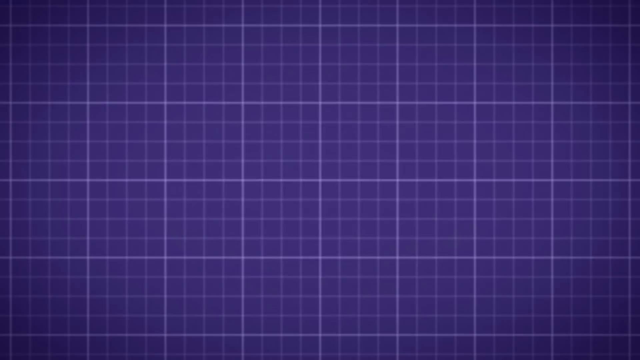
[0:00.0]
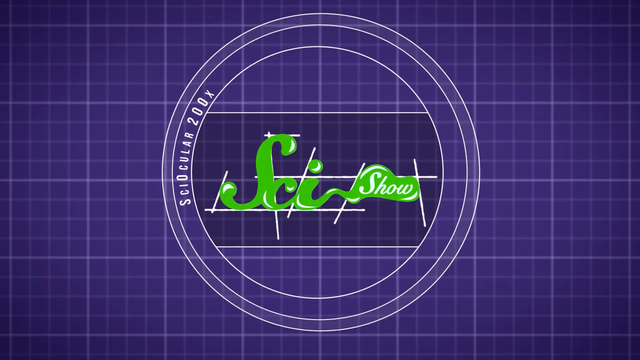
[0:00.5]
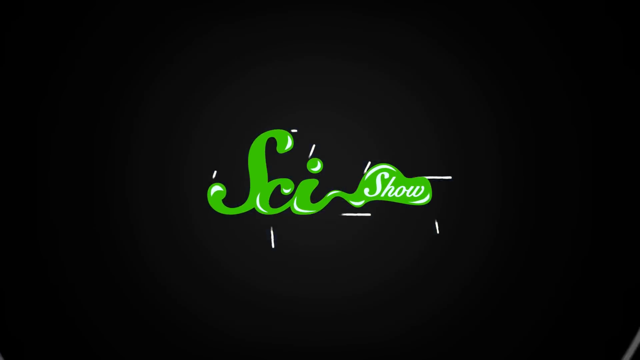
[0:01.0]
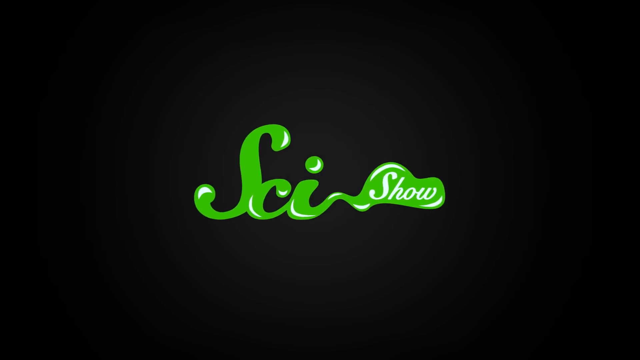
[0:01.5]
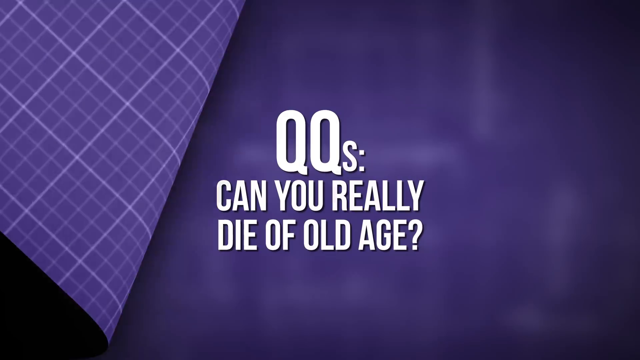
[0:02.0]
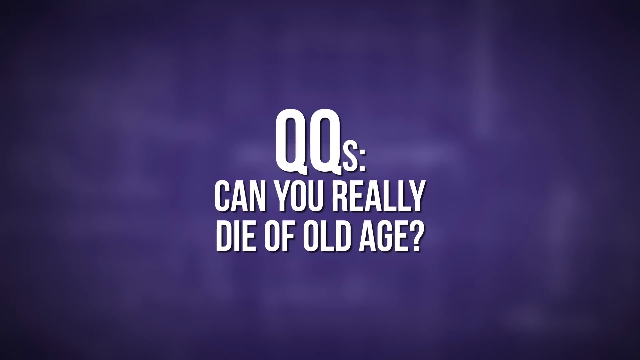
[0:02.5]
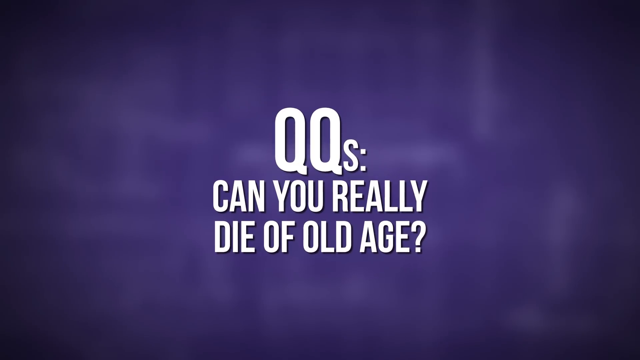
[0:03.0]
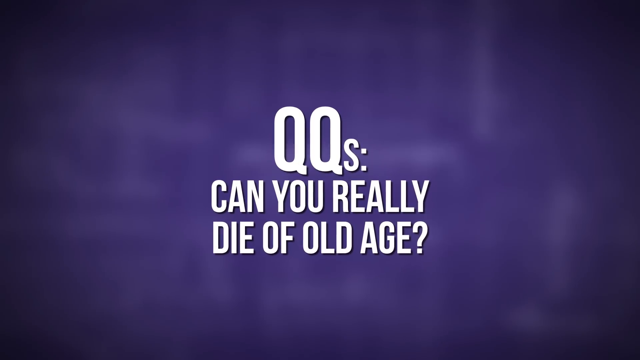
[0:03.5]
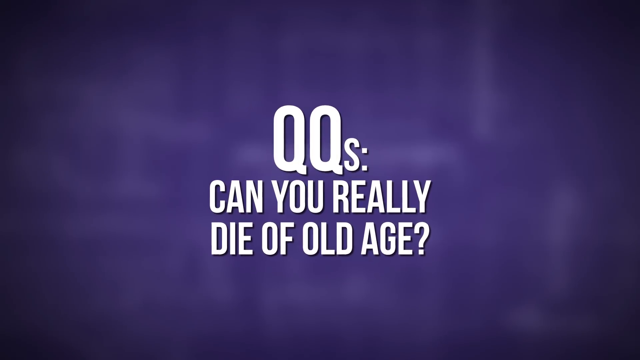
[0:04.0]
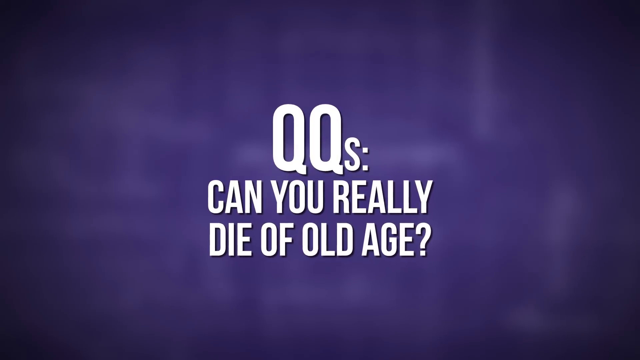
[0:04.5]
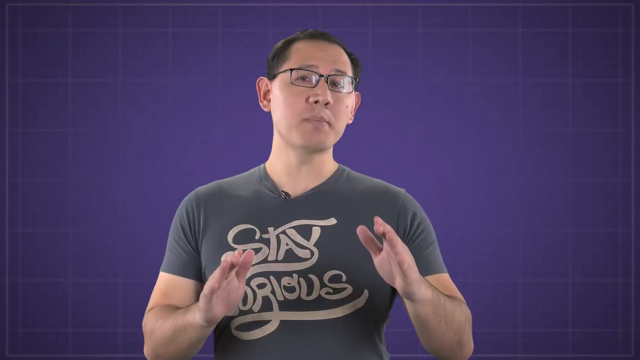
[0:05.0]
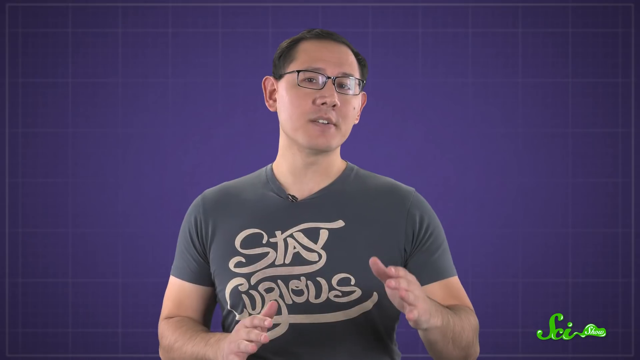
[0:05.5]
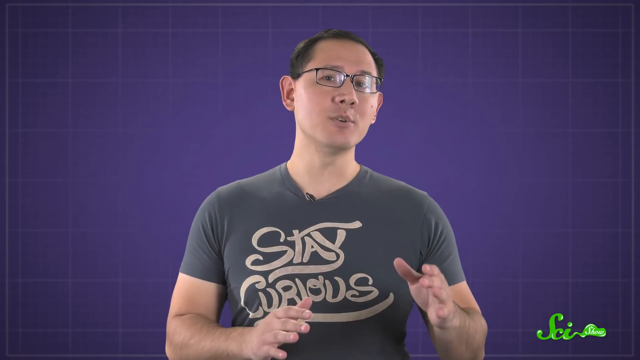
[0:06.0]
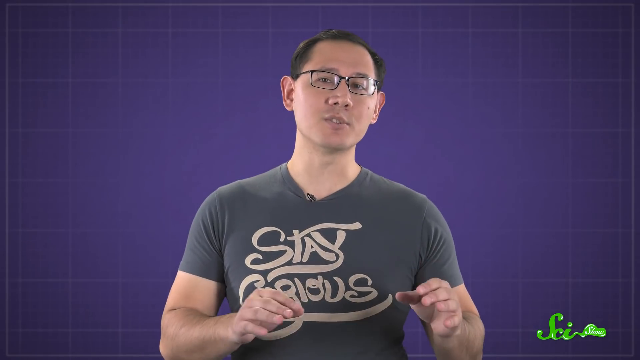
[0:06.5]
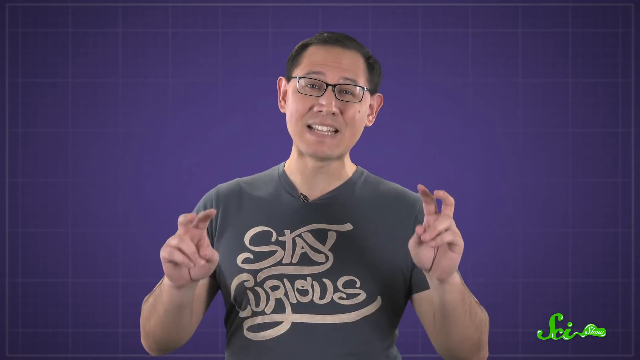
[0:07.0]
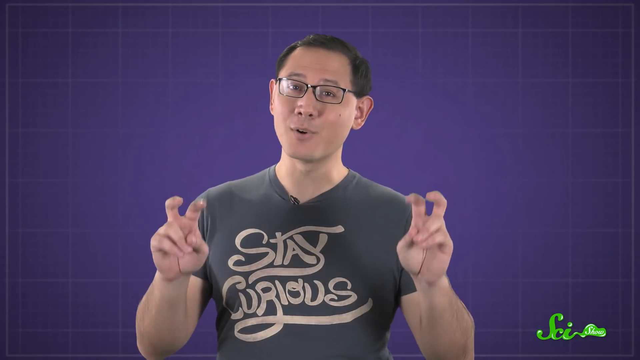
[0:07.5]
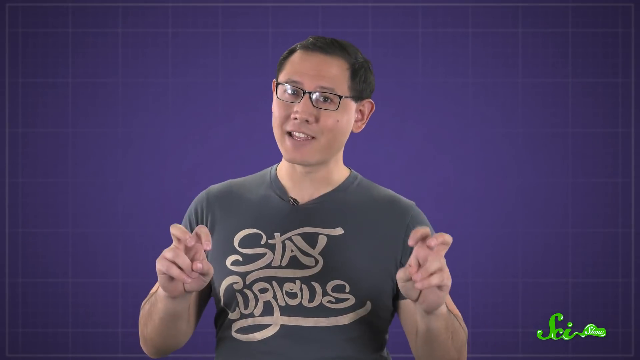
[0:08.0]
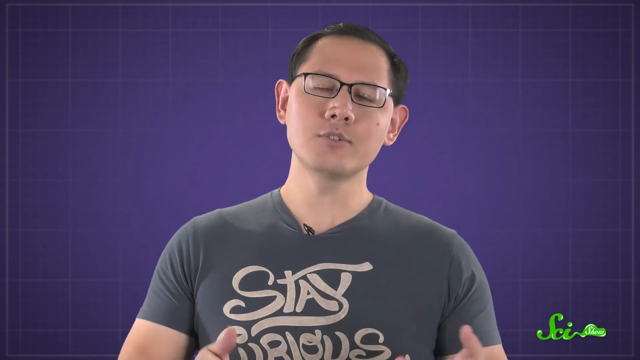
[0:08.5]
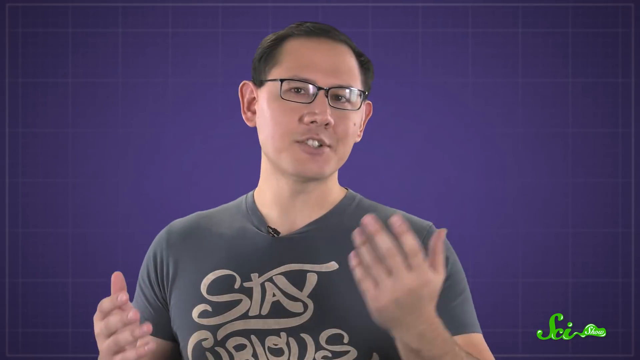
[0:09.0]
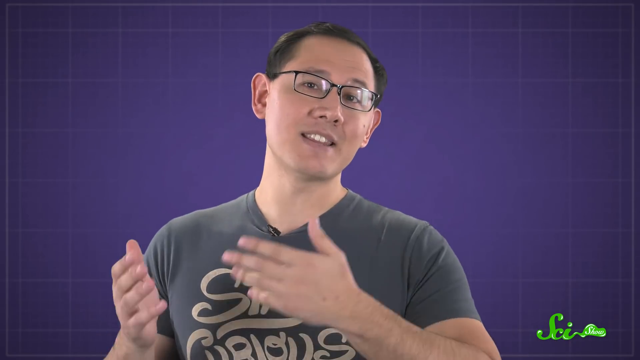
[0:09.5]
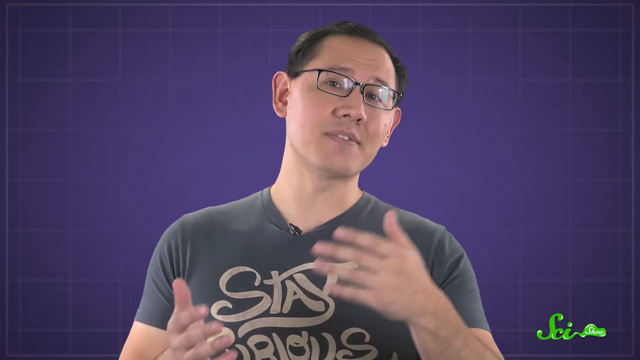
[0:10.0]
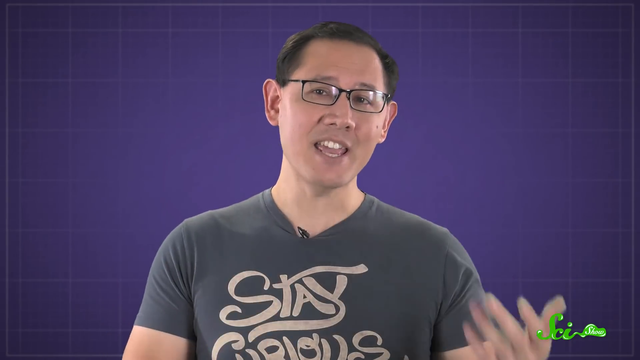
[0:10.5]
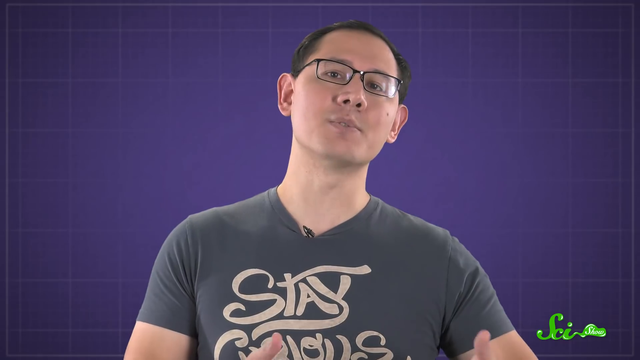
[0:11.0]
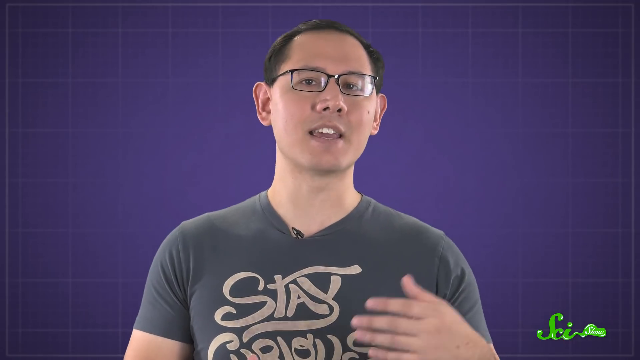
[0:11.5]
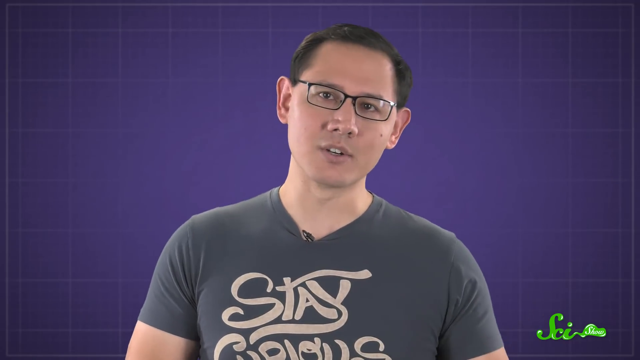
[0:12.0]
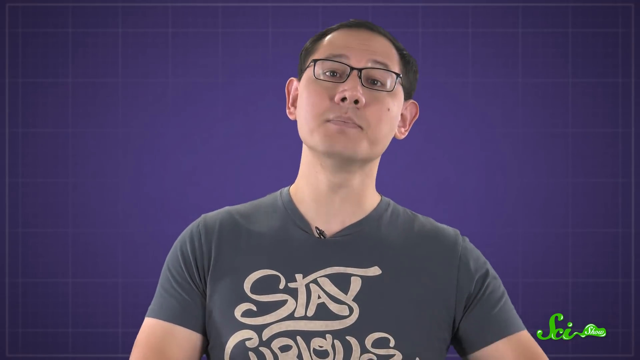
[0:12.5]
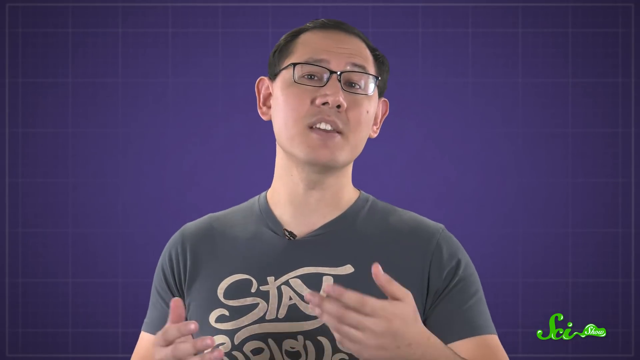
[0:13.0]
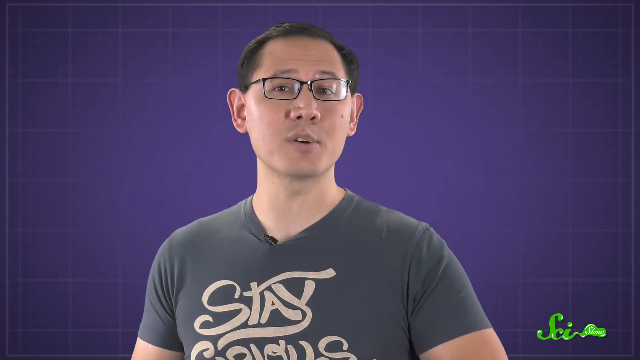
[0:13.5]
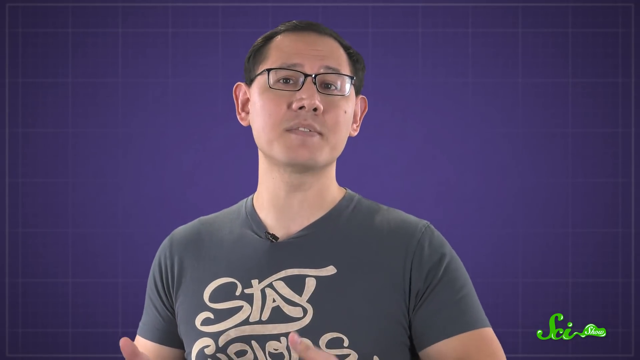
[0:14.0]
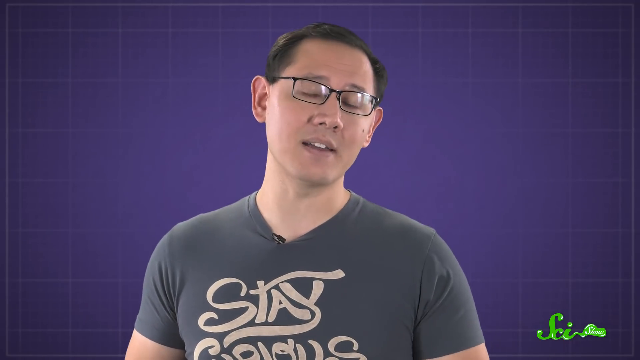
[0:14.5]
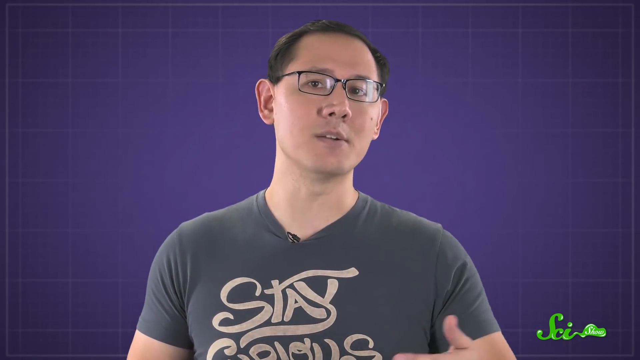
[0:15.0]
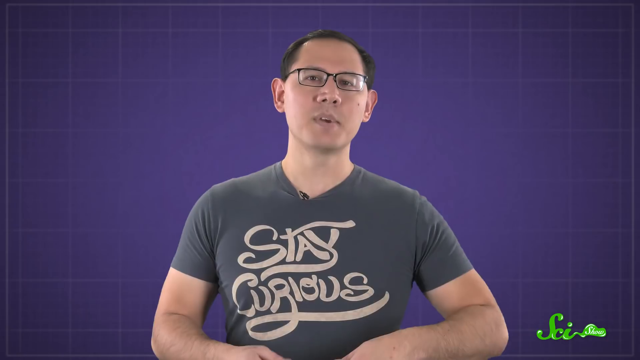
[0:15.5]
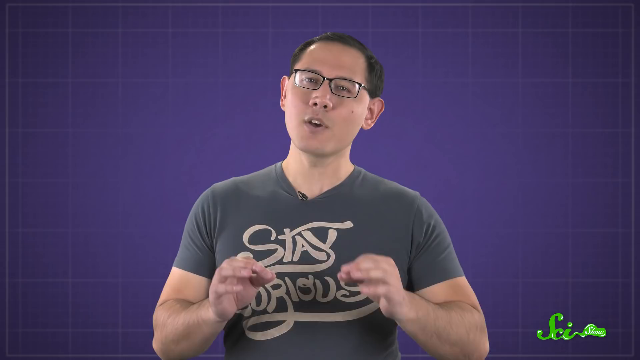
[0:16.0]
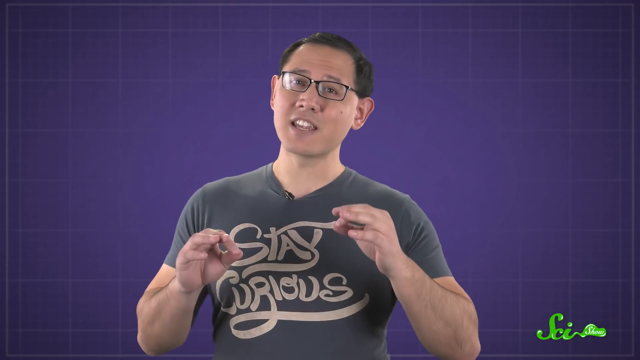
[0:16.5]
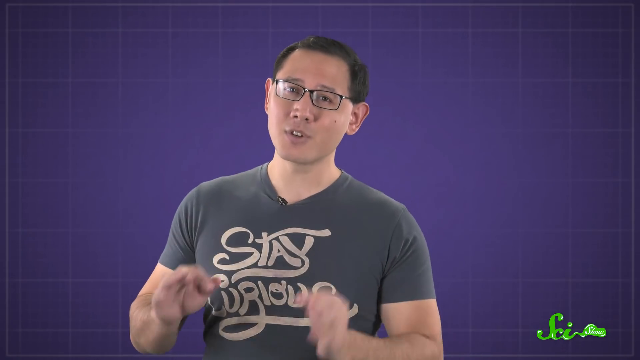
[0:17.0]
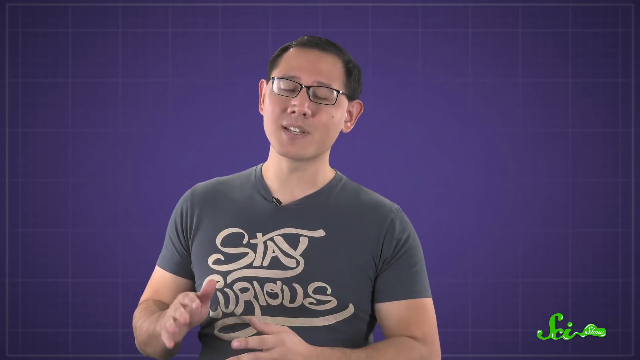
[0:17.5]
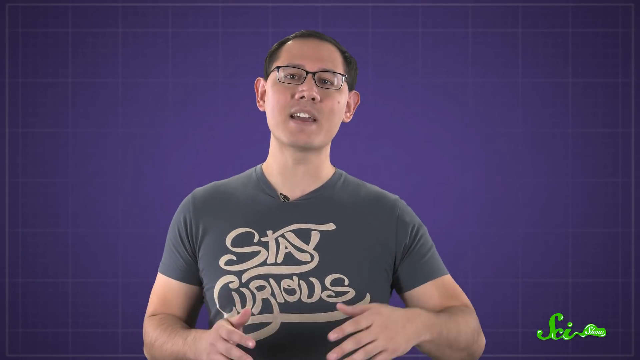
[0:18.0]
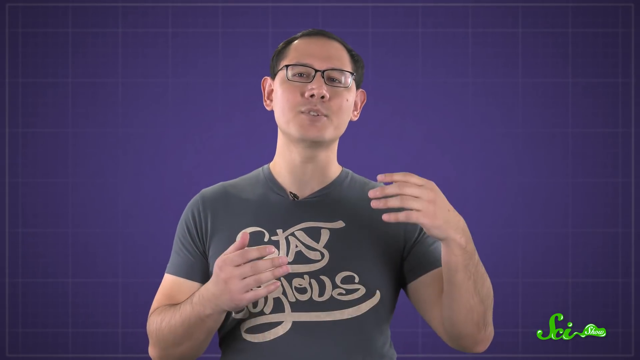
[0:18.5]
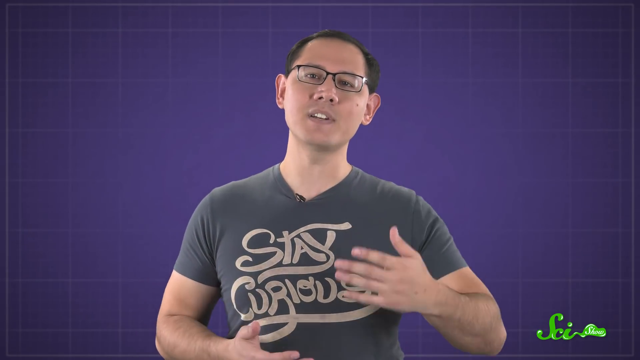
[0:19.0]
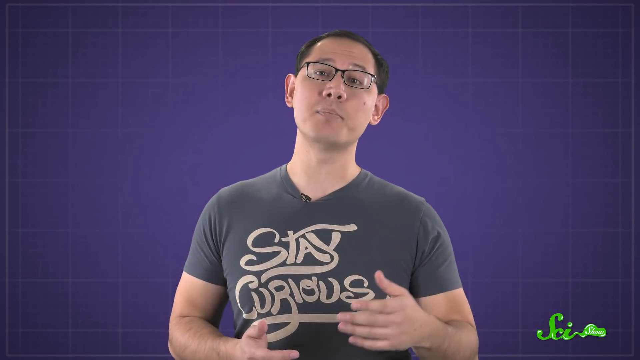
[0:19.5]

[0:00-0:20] A blue grid-like pattern with white lines appears, and then a logo pops up reading "SciShow," followed by the question "can you really die of old age" in white font. Early on, the logo is inside a circle that says "SciOcular 200x," against a purple background with grid lines. A peeling page transition then reveals a man speaking to the camera, gesturing with his hands and arms as he explains something. He wears glasses with black frames, and the background behind him is purple with a grid of thin white lines that sort of fade out towards the middle.